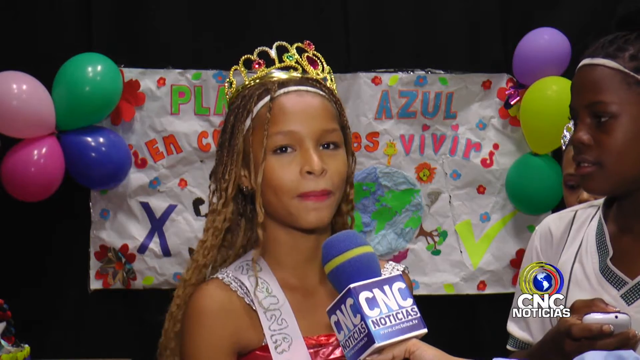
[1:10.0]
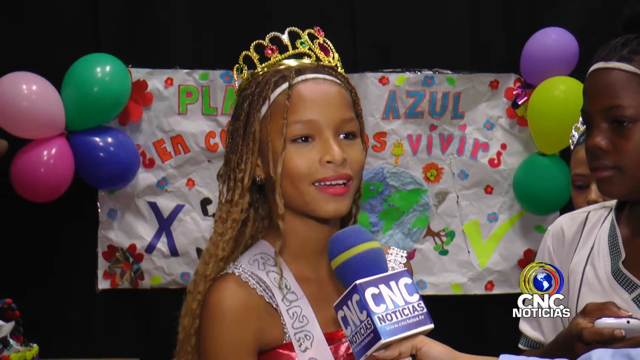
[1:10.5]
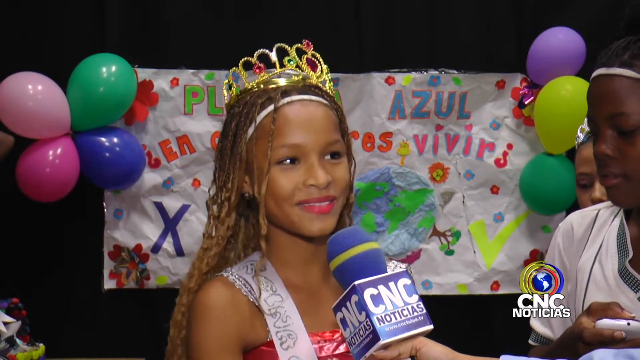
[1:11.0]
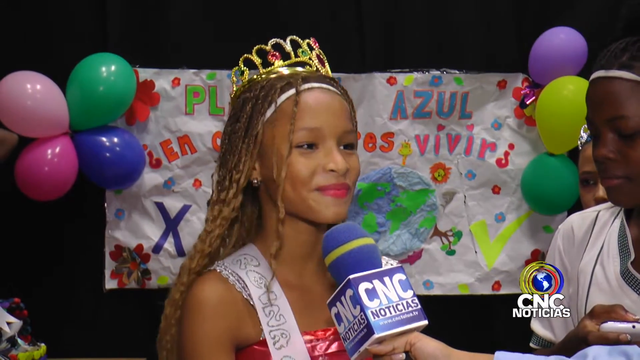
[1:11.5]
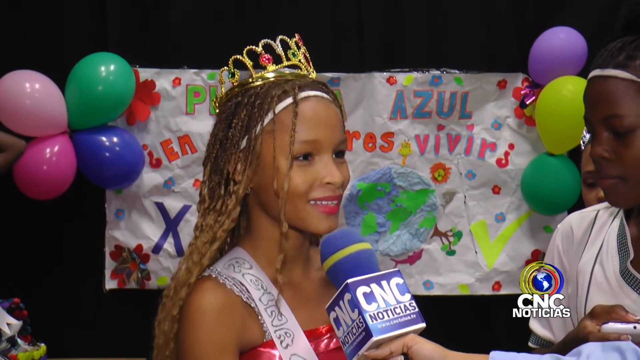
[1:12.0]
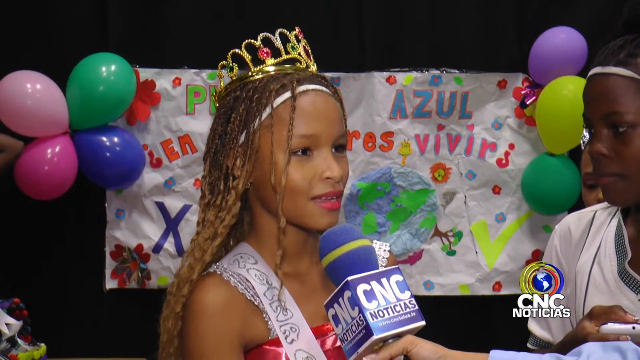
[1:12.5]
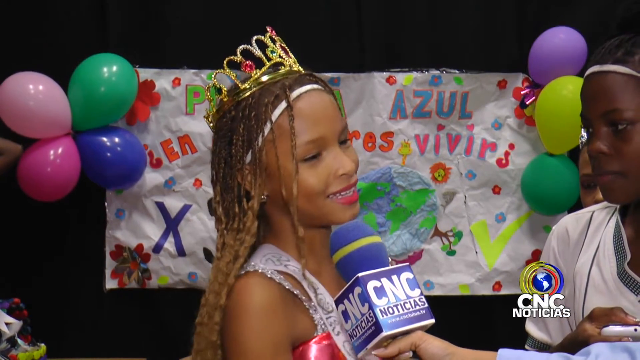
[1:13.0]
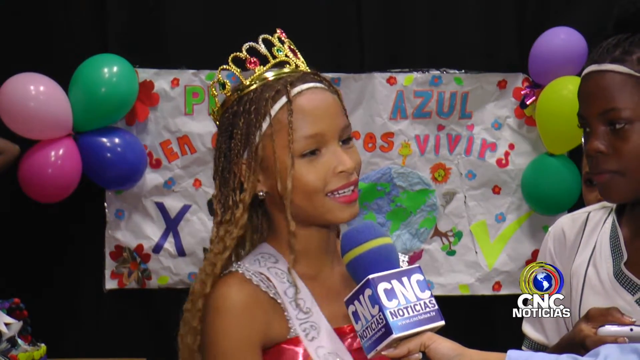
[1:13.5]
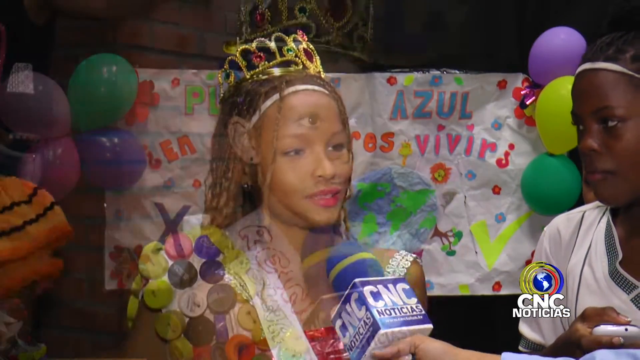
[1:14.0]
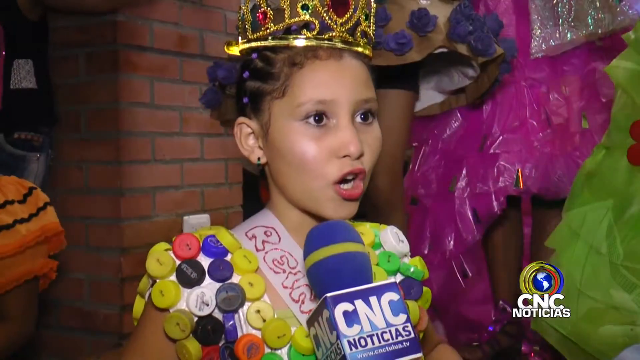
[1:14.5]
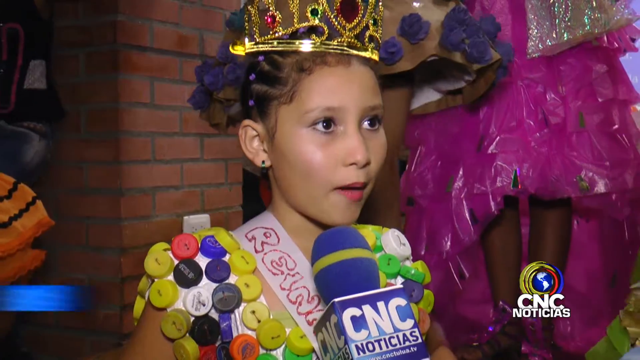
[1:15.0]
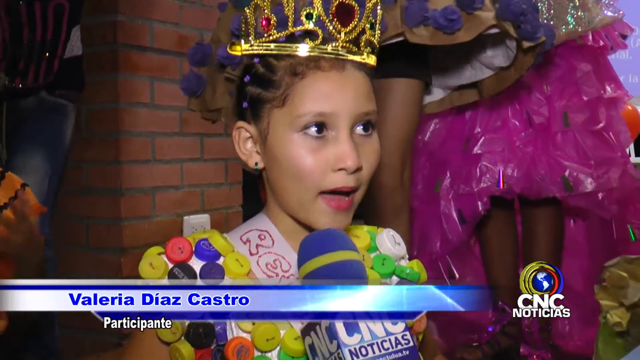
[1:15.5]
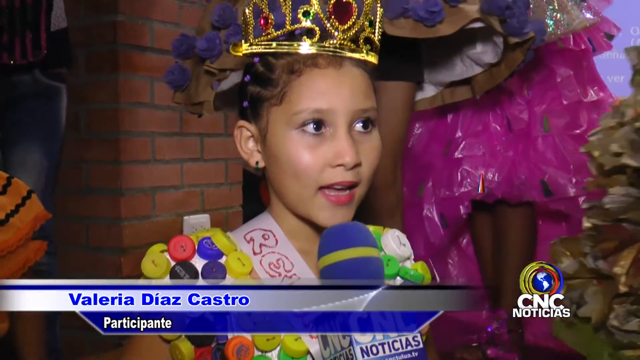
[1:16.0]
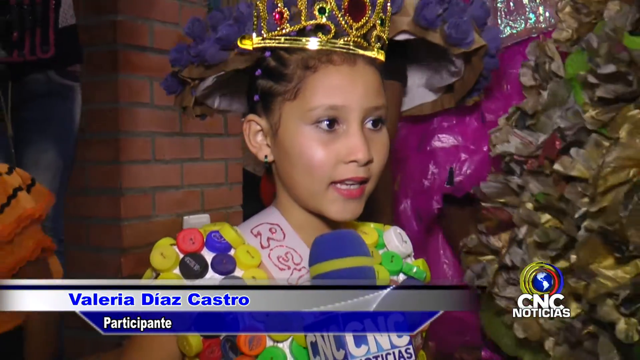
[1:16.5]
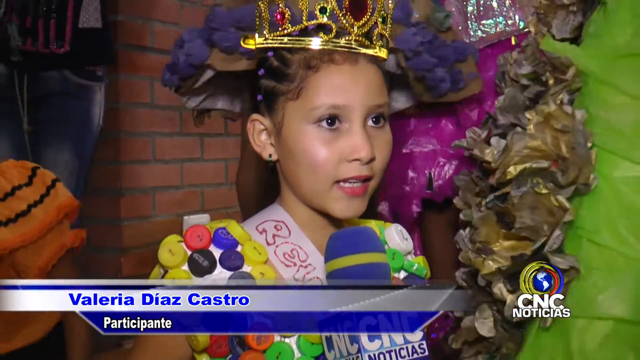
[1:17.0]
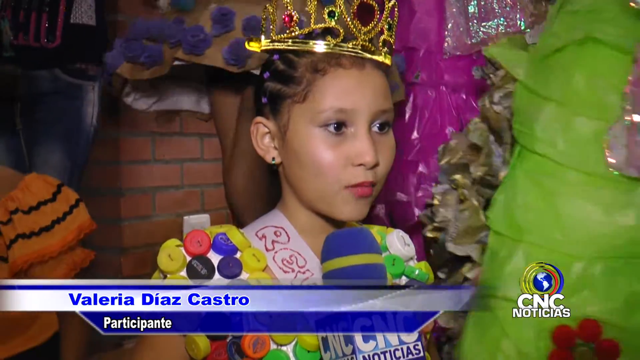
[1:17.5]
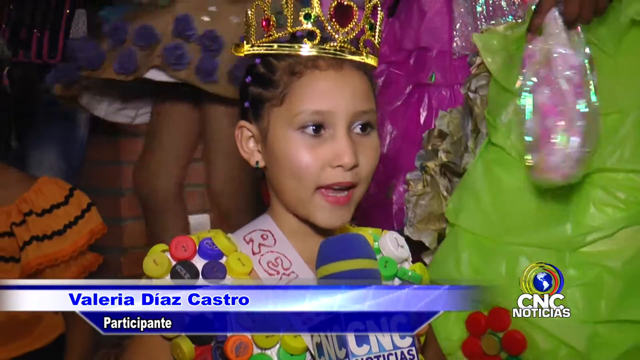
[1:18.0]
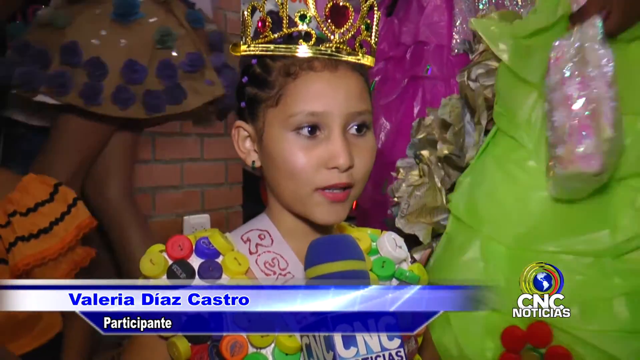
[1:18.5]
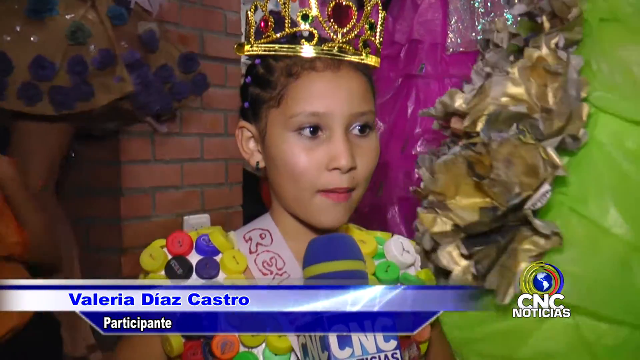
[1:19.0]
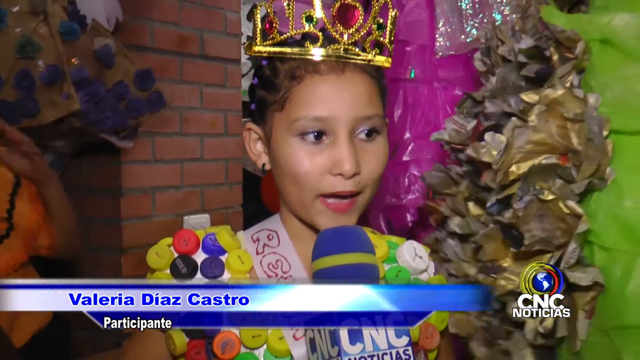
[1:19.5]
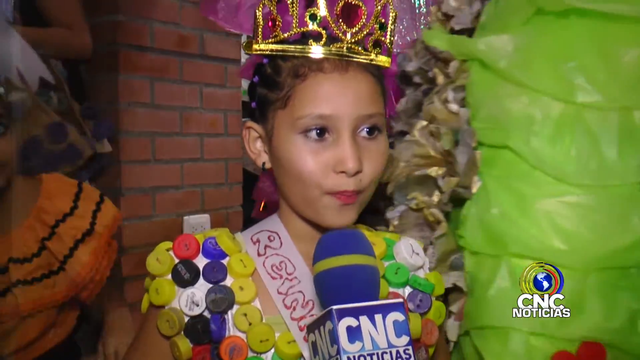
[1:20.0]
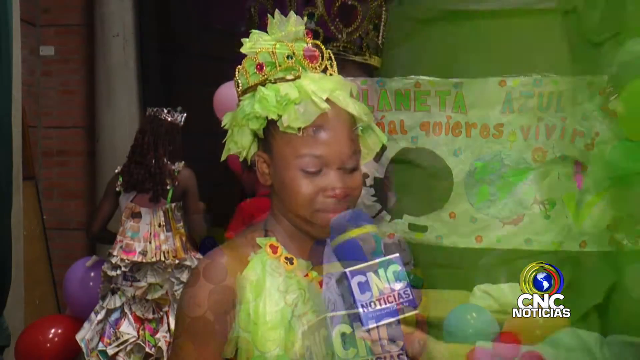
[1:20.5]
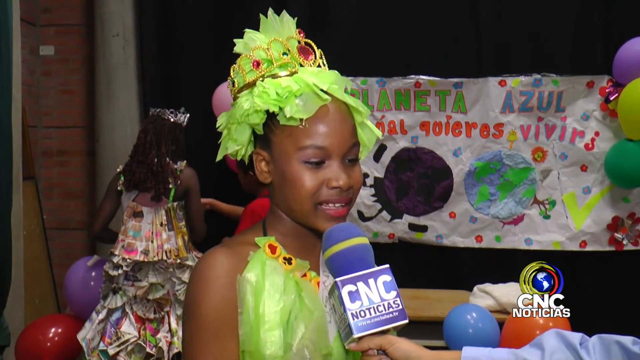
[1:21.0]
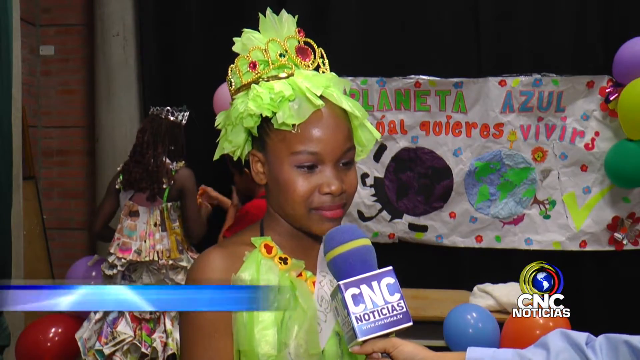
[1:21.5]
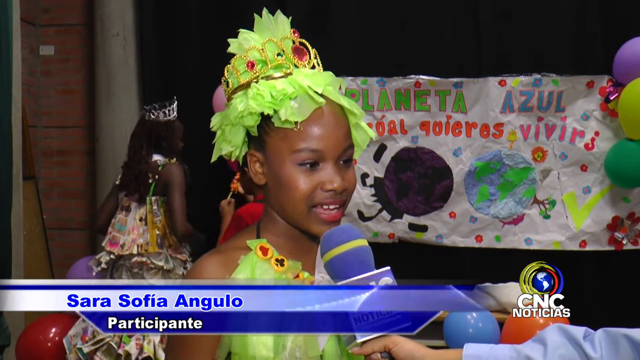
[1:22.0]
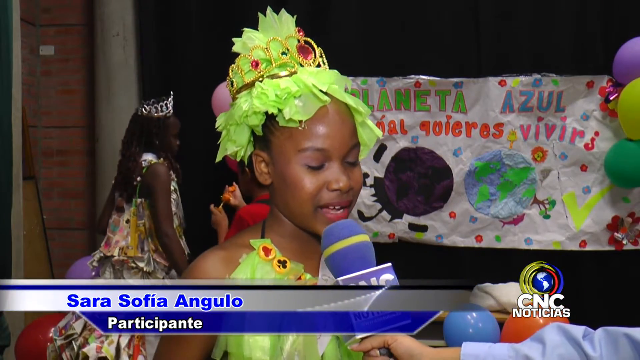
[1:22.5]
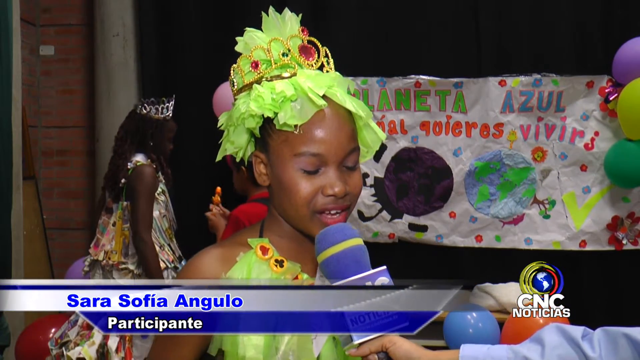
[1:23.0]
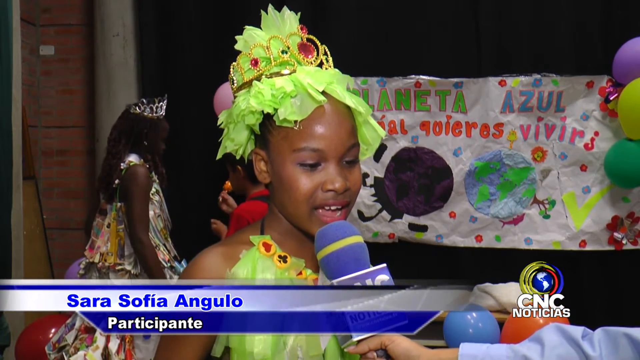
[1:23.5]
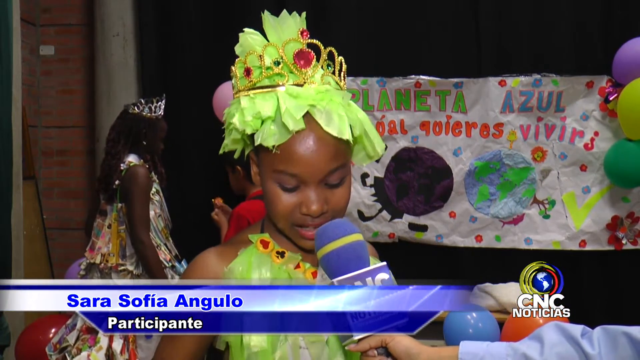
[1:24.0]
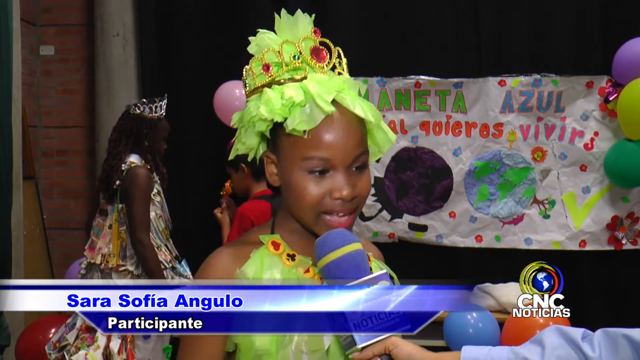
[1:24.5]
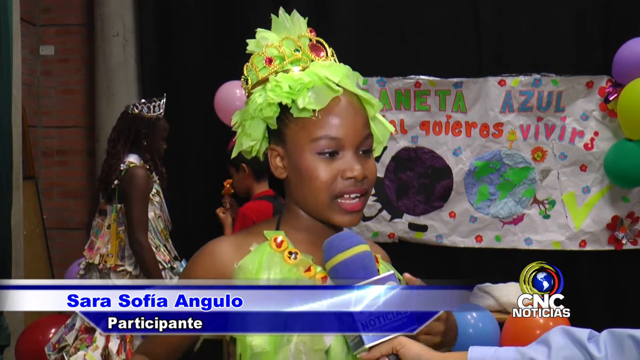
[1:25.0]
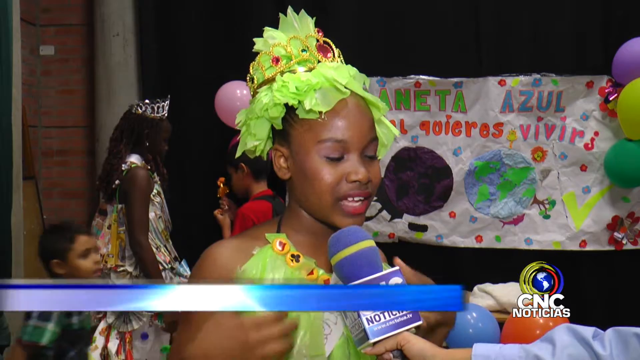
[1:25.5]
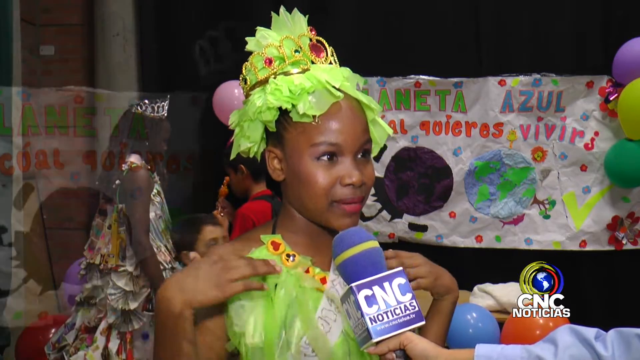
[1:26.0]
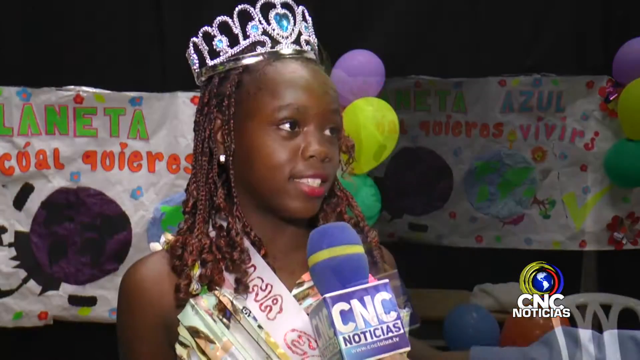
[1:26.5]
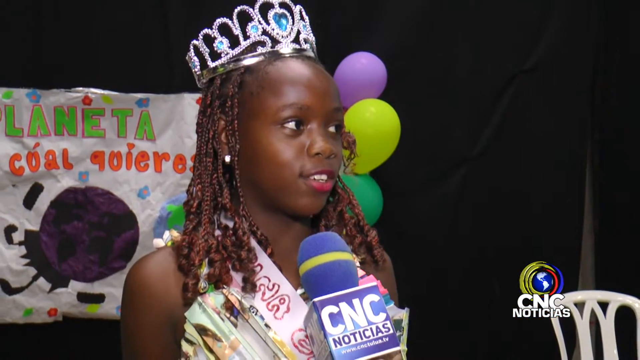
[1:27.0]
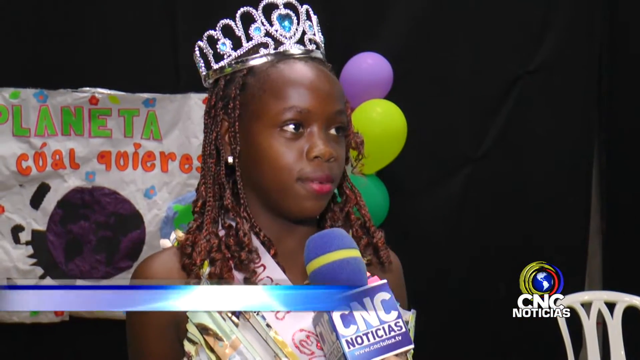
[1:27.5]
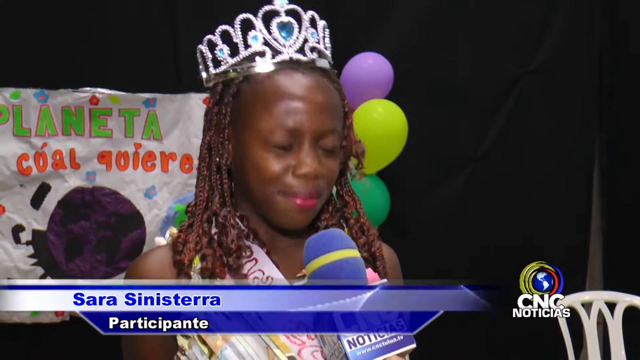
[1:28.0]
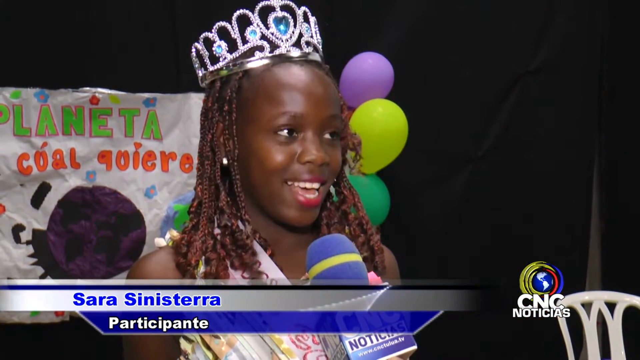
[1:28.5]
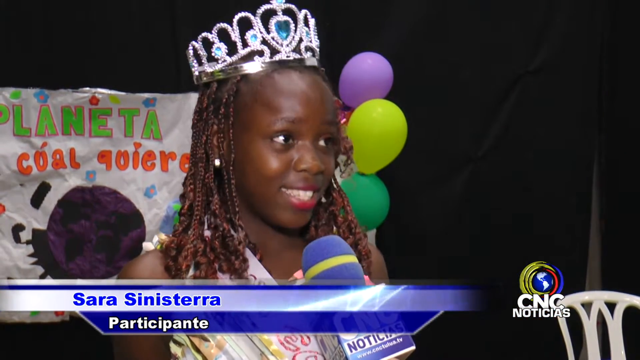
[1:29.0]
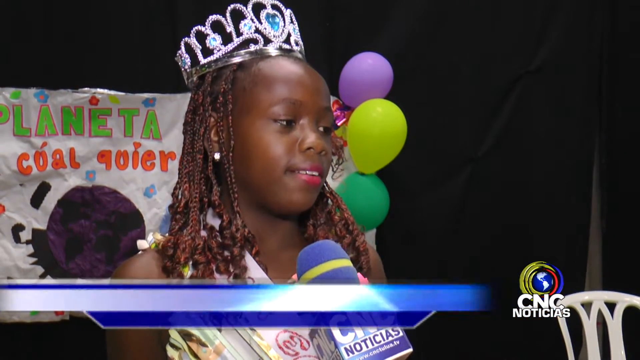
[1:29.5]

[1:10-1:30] With the title "Las Noticias Que Usted Quiere Ver Lunes A Viernes", C&C Noticias shows interviews with some of the African American girls from the school. The event kind of looks like a prom, but also sort of like a Mardi Gras mixed with a play, with a Hispanic influence. The first interviewee is Carol Nicole Hurtado, a participant who is African American and apparently a student at the school. Next is Valeria Diaz Castro, who appears to be Hispanic, maybe Mexican. Then Sarah Sofia Angelo, the girl who was wearing green as the nature-type being, is interviewed. Behind her is a banner about ecology, showing something about coal: a planet that looks basically destroyed by coal, and another planet based in nature.